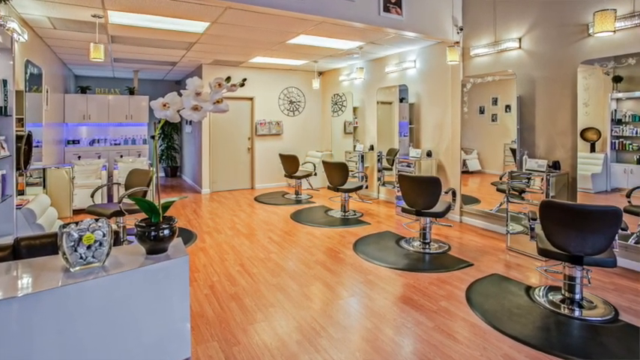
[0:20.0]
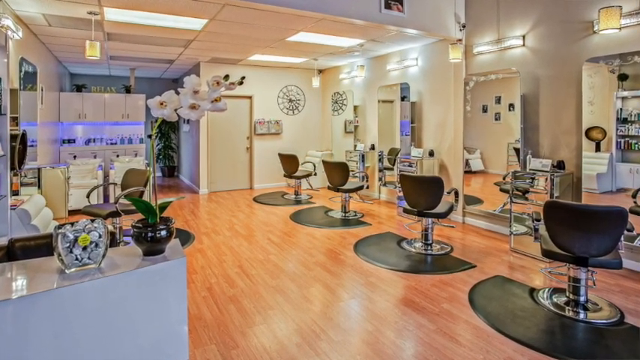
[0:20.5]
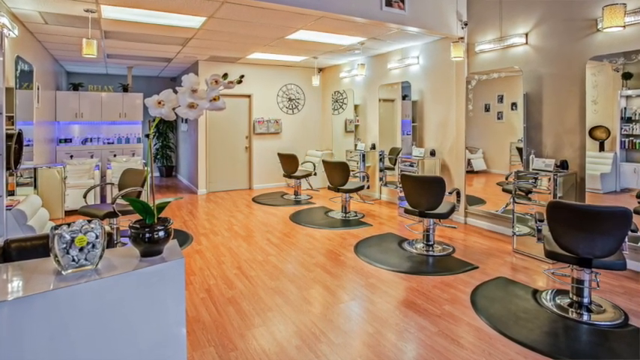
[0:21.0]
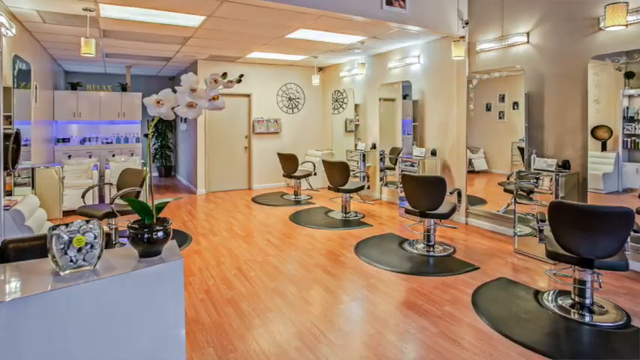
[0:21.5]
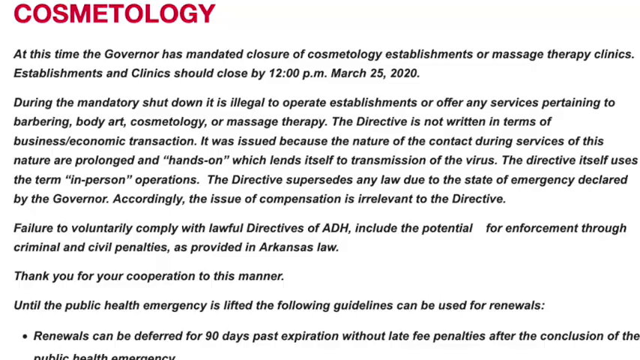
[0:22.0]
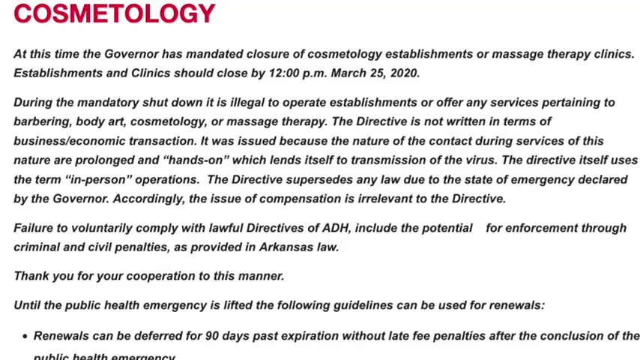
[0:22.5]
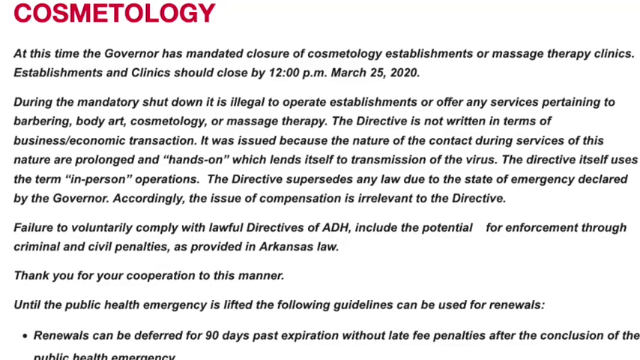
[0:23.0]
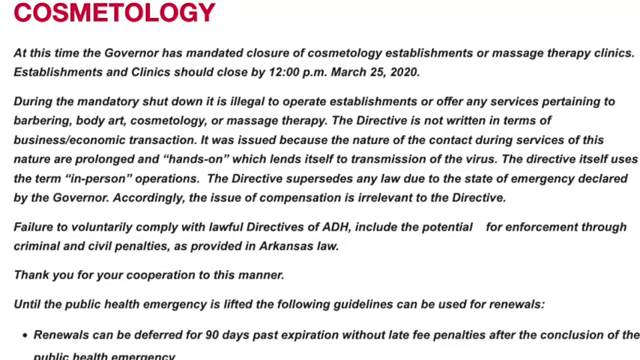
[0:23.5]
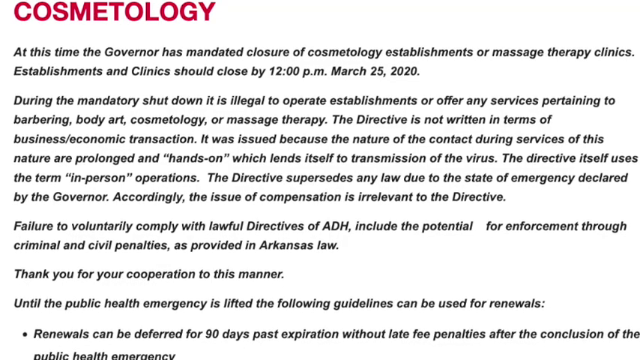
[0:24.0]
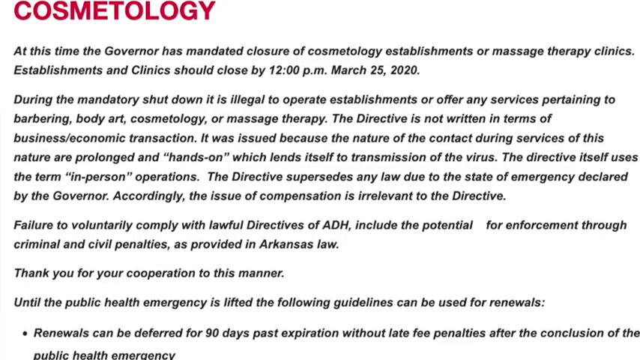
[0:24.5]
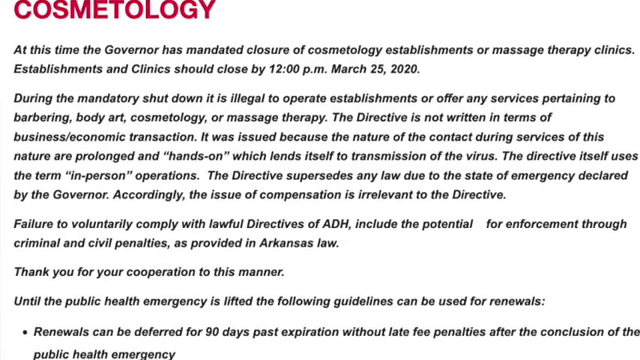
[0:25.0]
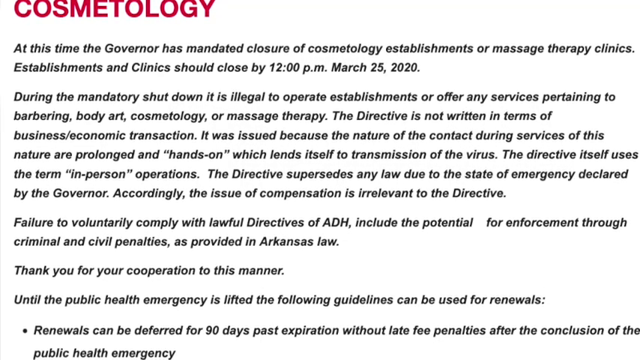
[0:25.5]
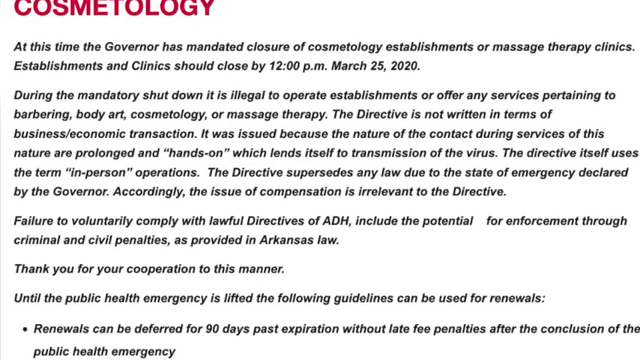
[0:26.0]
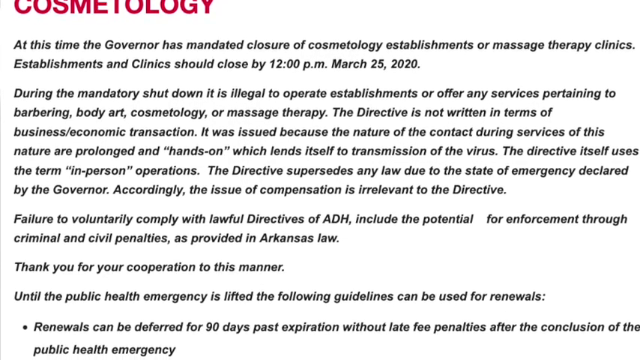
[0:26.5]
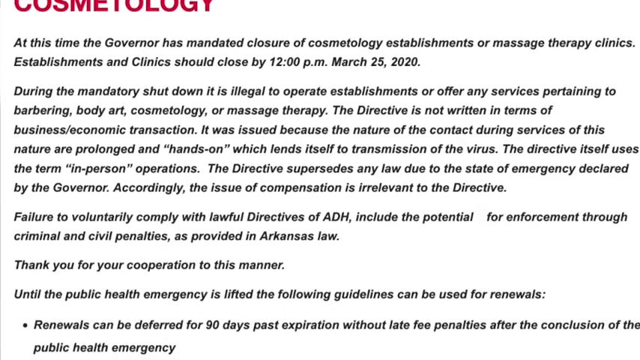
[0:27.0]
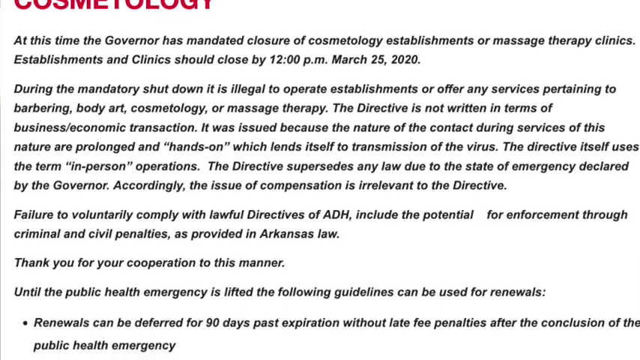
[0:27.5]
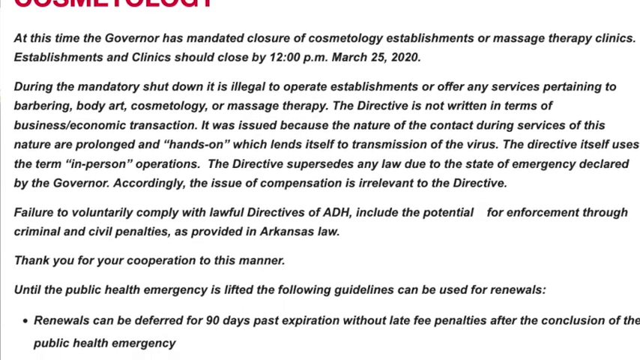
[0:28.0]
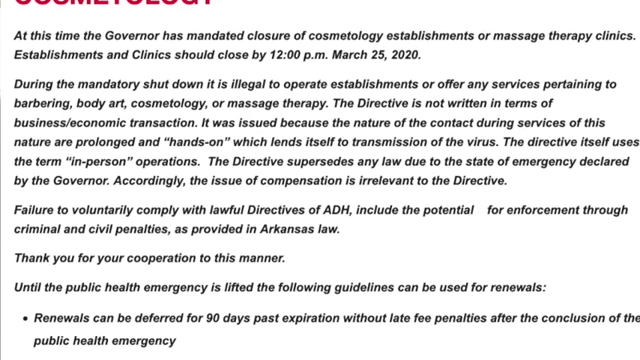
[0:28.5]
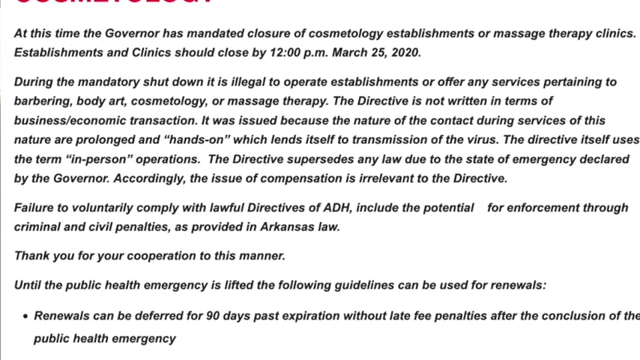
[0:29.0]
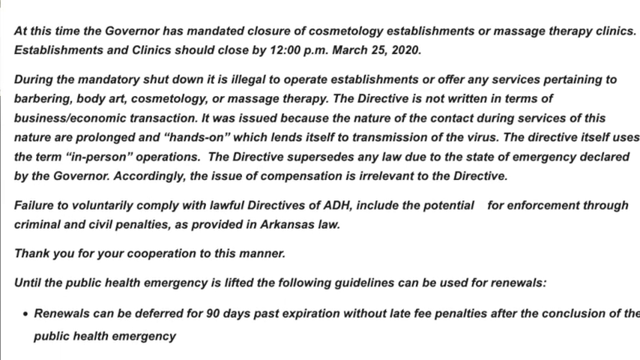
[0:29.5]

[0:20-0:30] The same hair salon interior appears, with a hair washing station in the back. It then cuts to a document titled "cosmetology", with the title in red and the rest of the text in black italics. The text reads: "At this time the governor has mandated closure of cosmetology establishments or massage therapy clinics. Establishments and clinics should close by 12 p.m. March 25, 2020. During the mandatory shutdown, it is illegal to operate establishments or offer any services pertaining to barbering, body art, cosmetology, or massage therapy. The directive is not written in terms of business/economic transaction. It was issued because the nature of the contact during these services are prolonged and hands-on, which leads itself to transmission of the coronavirus."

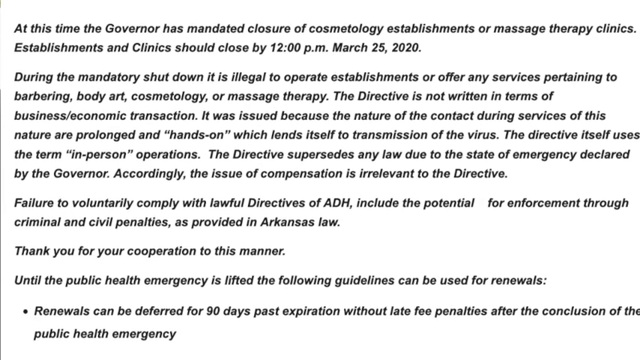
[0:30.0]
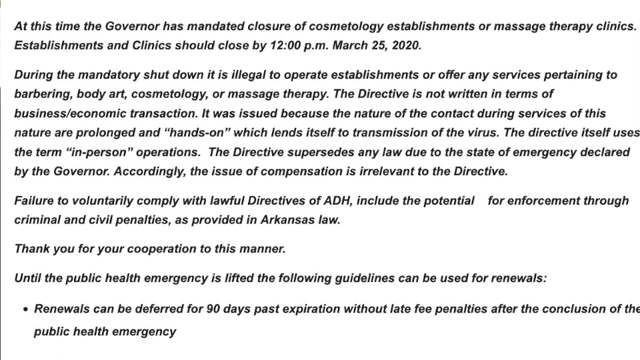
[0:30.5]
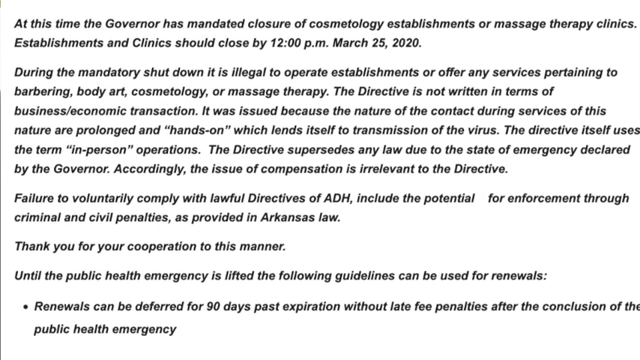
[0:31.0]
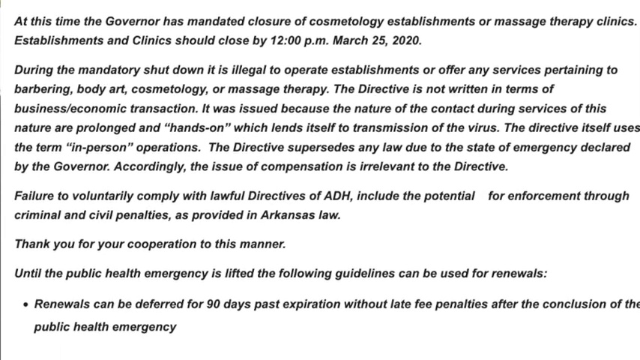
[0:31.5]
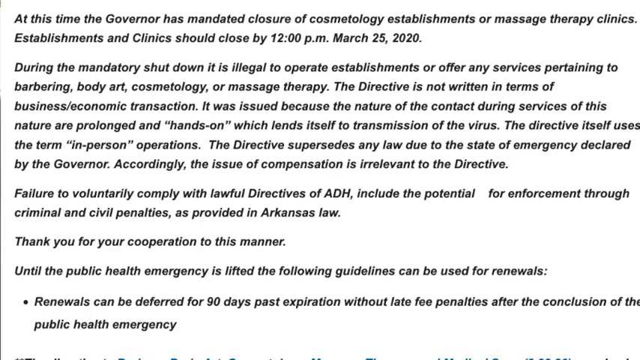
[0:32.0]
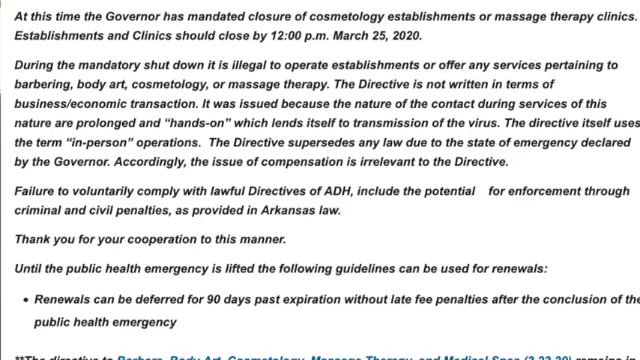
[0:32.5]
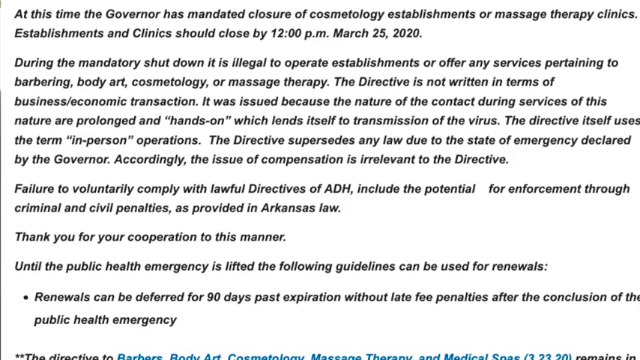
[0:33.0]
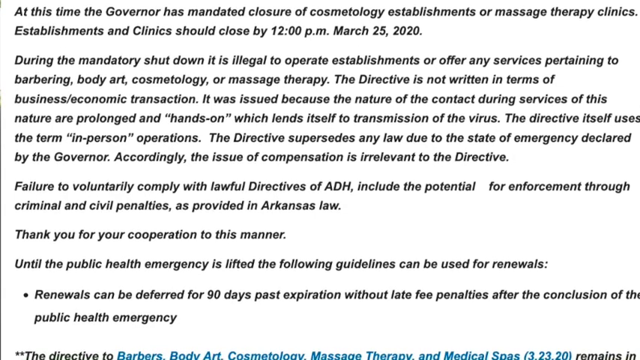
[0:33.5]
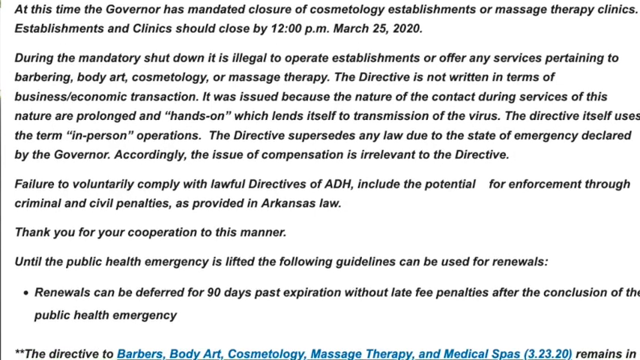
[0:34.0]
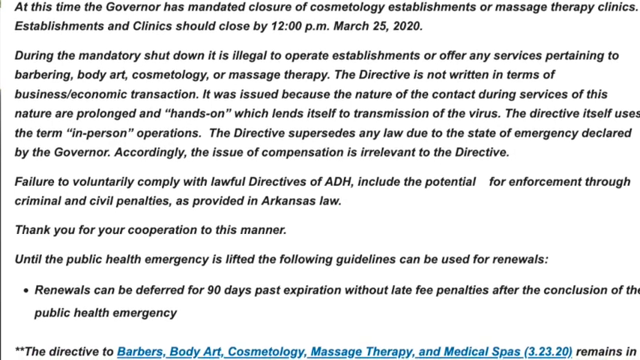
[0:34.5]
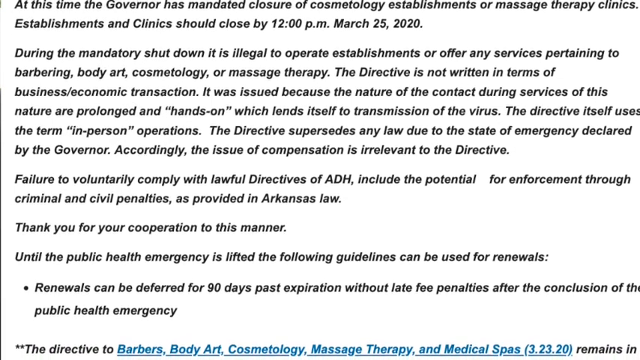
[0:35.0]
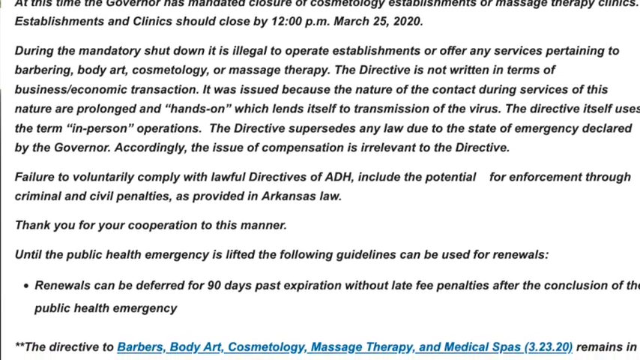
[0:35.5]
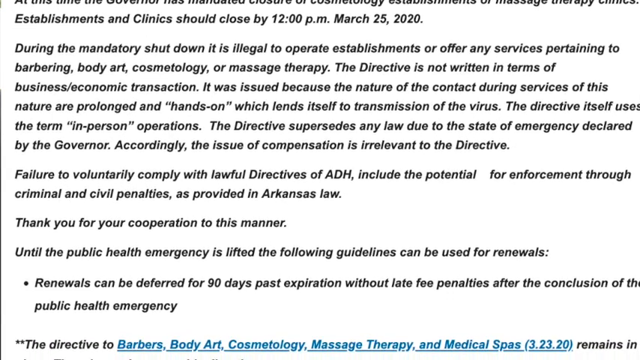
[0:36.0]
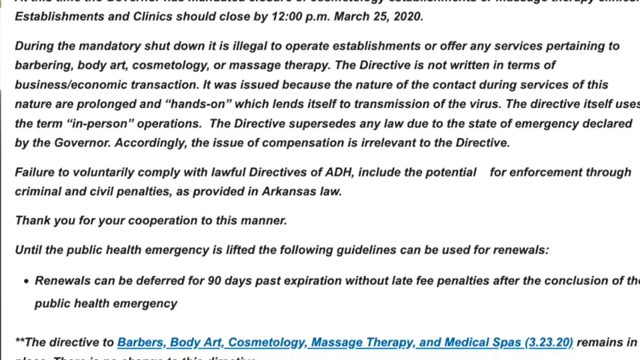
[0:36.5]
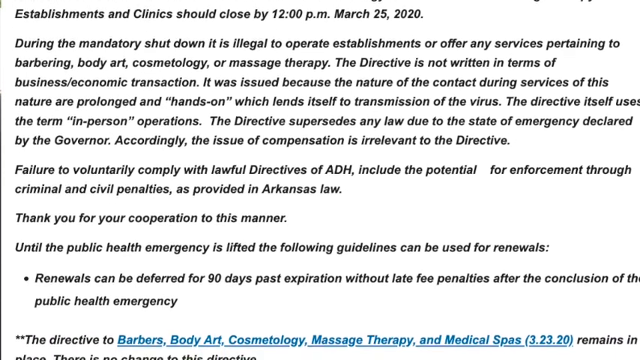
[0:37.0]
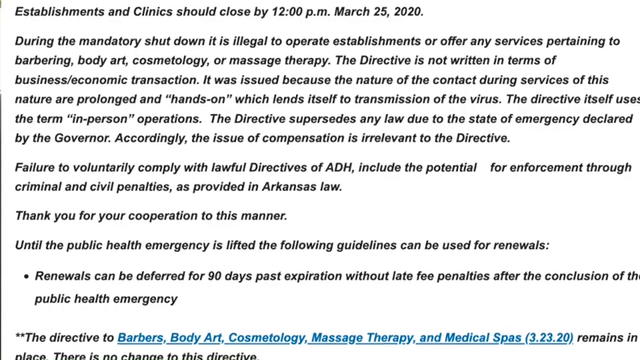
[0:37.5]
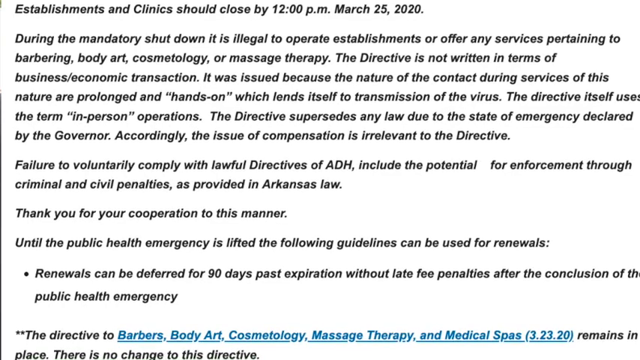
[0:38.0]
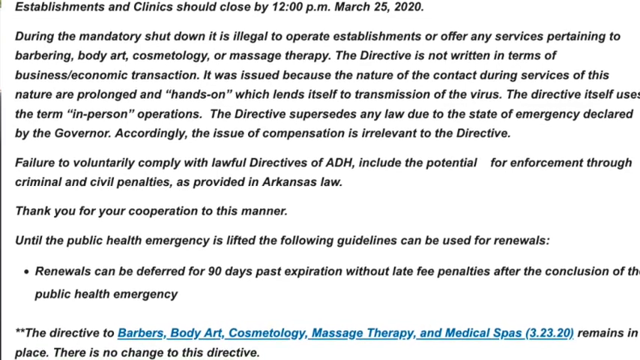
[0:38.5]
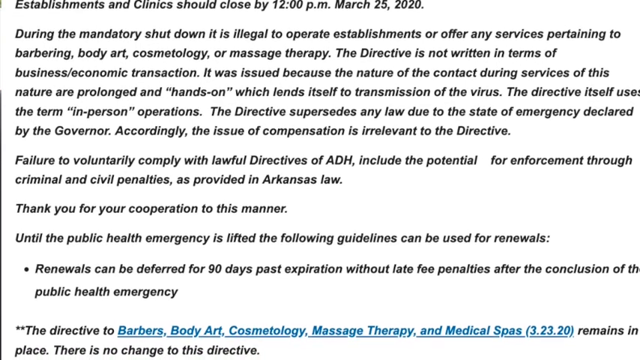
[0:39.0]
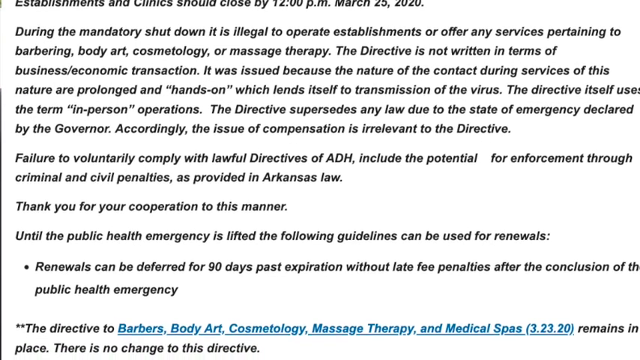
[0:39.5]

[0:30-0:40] The document continues: "The directive itself uses the term in-person operations. Accordingly, the issue of compensation is irrelevant to the directive. Failure to voluntarily comply with lawful directives of ADH include the potential for enforcement through civil and criminal penalties as provided in Arkansas law. Thank you for your cooperation to this matter. Until the public health emergency is lifted, the following guidelines can be used for renewals. 1. Renewals can be deferred for 90 days past expiration without late fees after the conclusion of the public health emergency." At the end of the document are hyperlinks for barbers, body art, cosmetology, massage therapy, and medical spas.